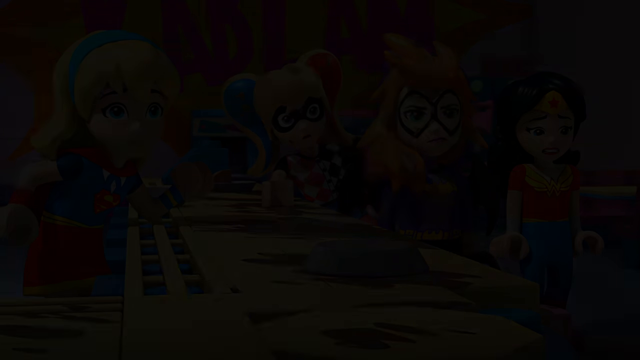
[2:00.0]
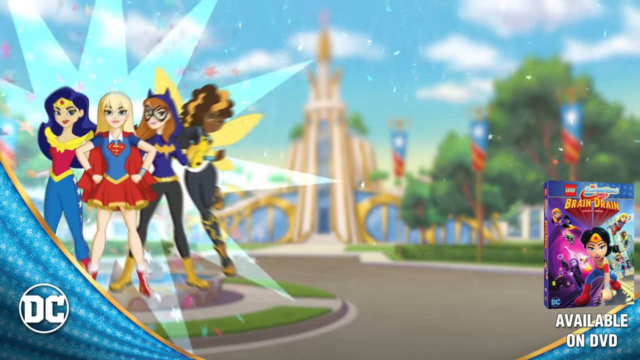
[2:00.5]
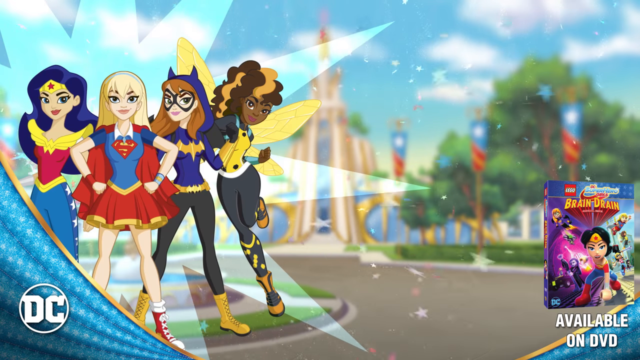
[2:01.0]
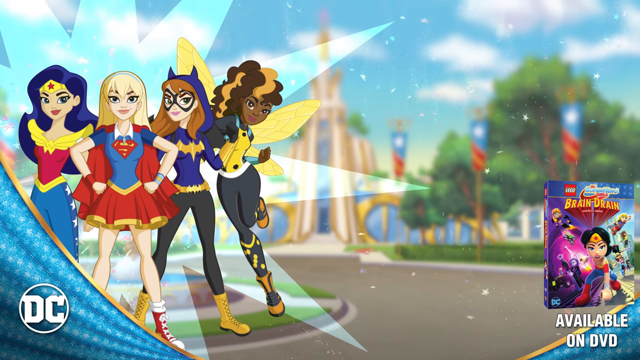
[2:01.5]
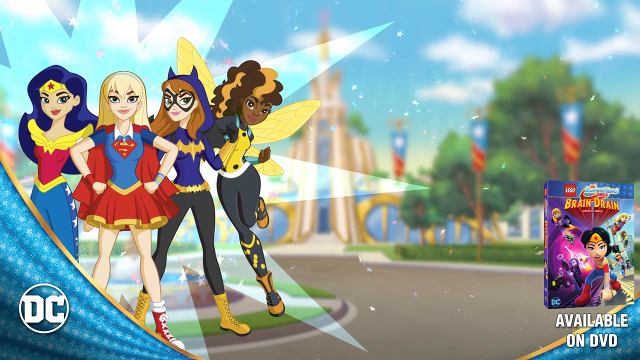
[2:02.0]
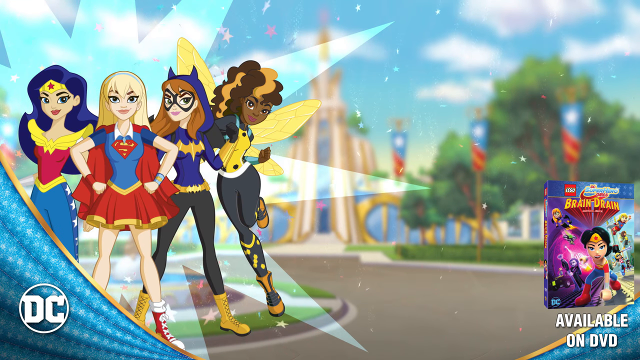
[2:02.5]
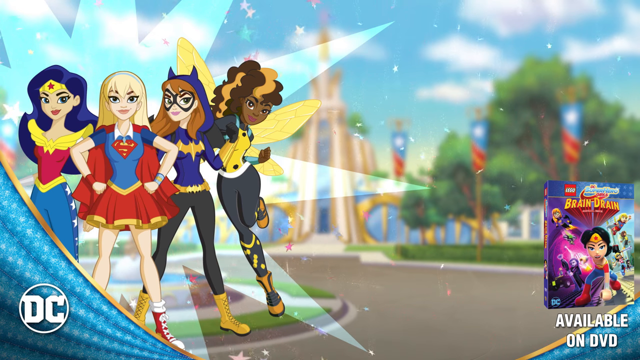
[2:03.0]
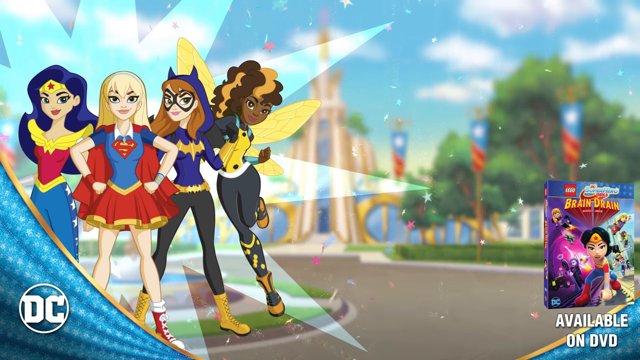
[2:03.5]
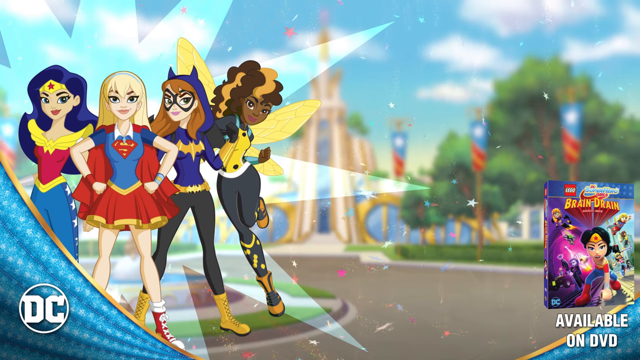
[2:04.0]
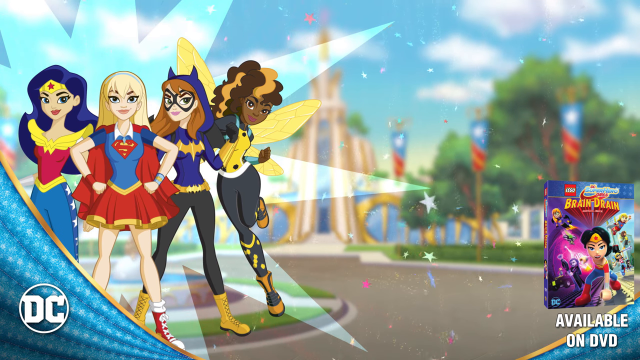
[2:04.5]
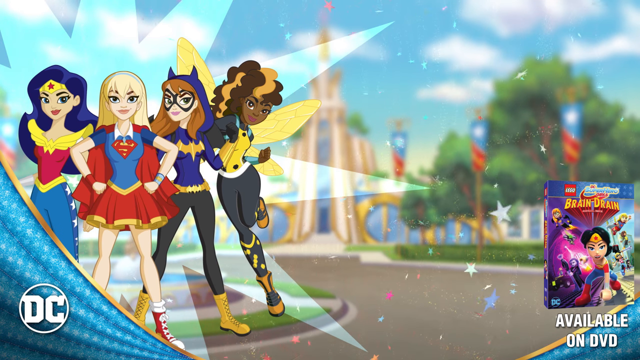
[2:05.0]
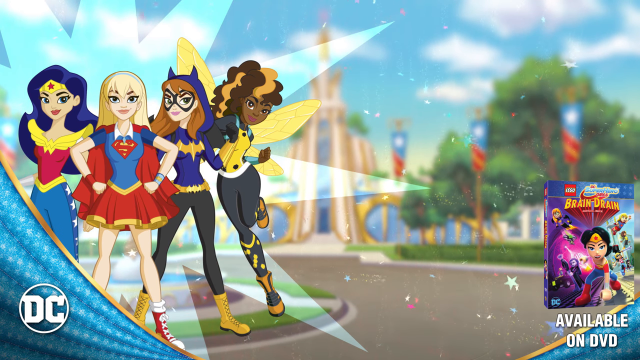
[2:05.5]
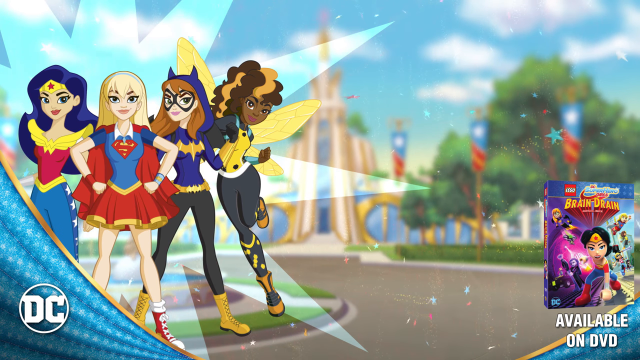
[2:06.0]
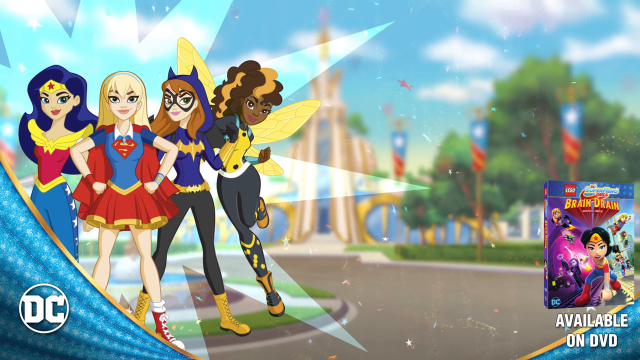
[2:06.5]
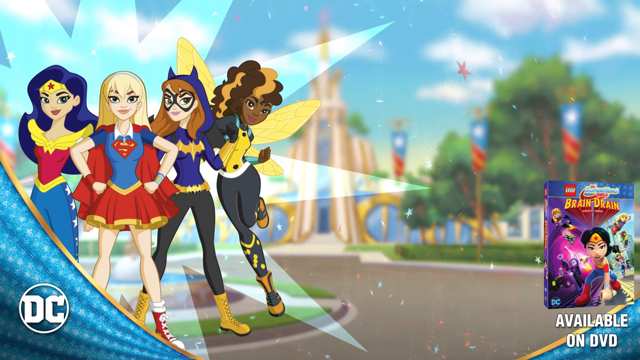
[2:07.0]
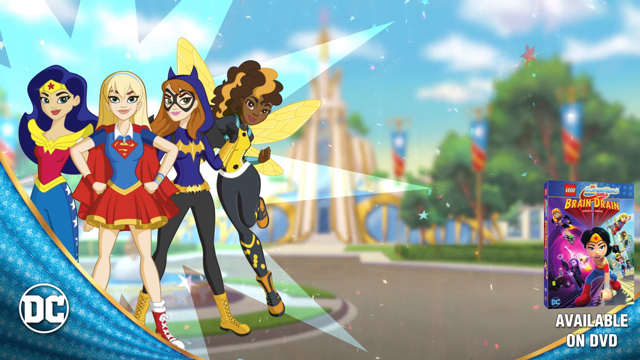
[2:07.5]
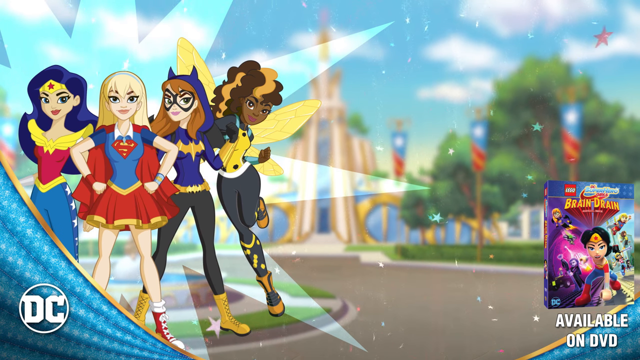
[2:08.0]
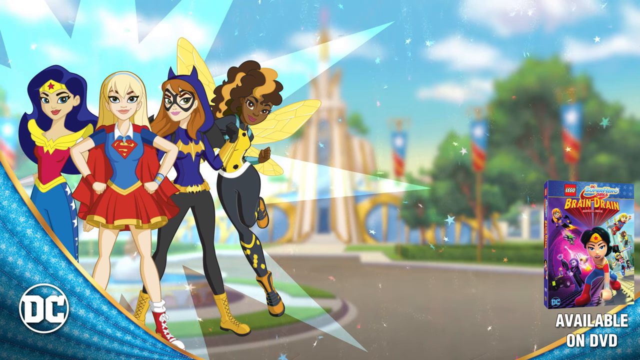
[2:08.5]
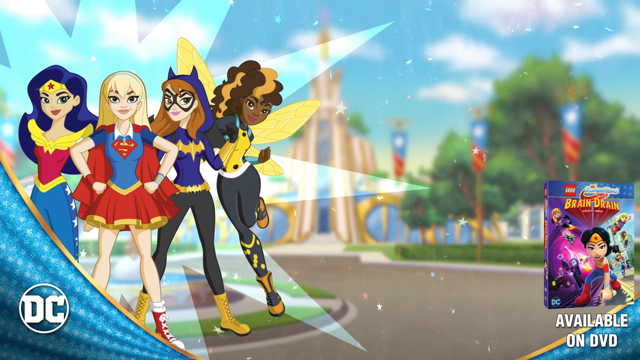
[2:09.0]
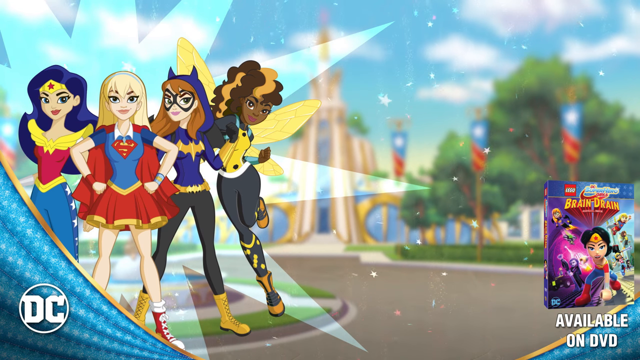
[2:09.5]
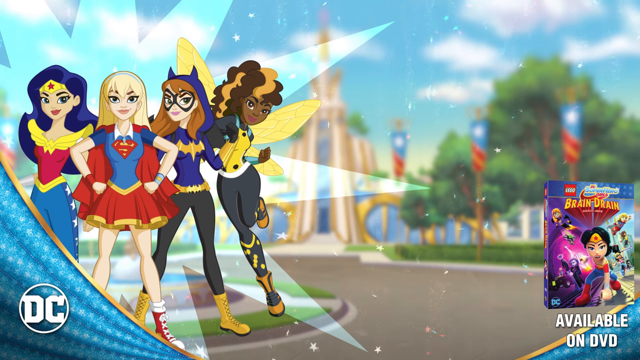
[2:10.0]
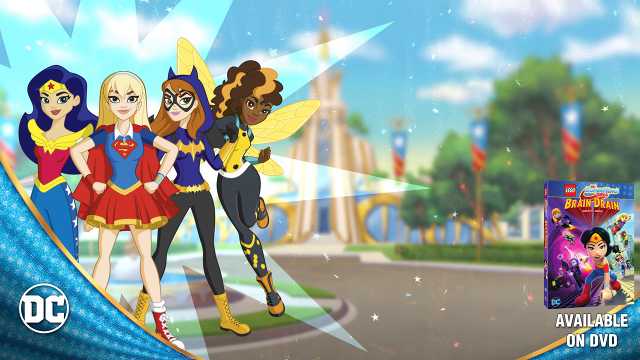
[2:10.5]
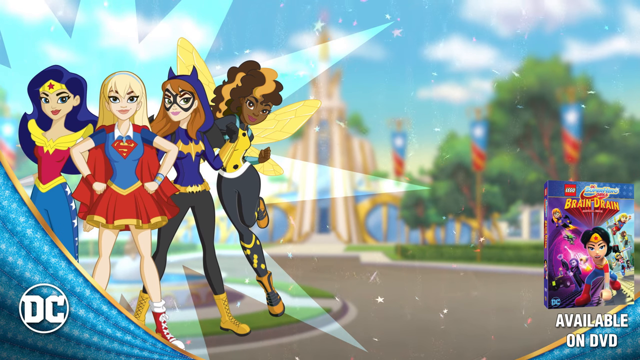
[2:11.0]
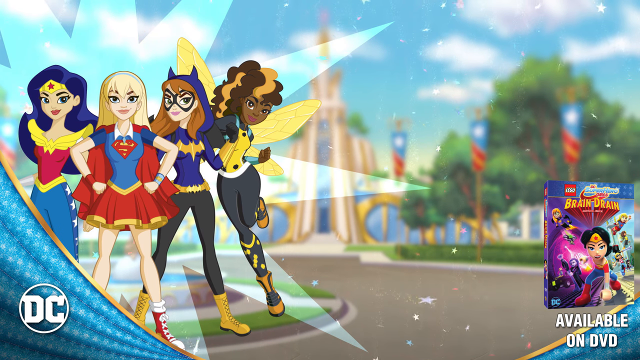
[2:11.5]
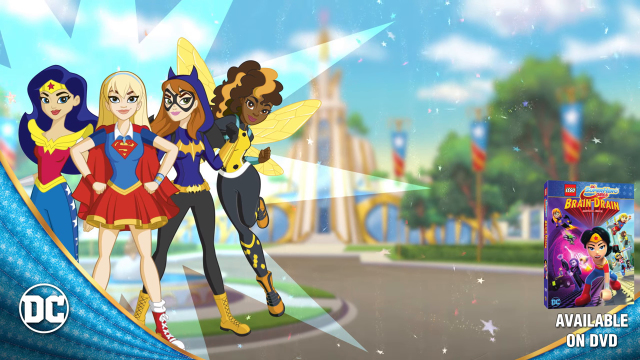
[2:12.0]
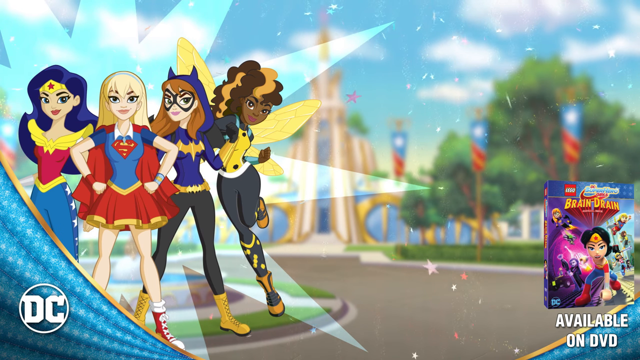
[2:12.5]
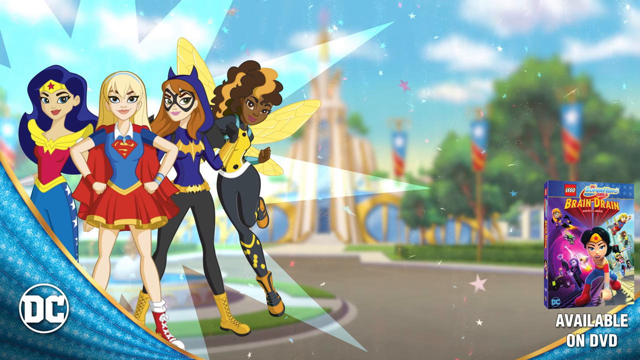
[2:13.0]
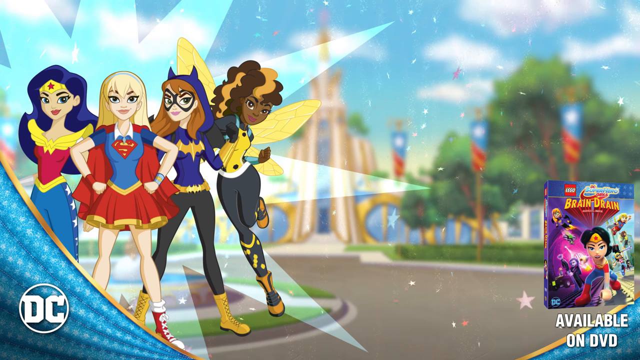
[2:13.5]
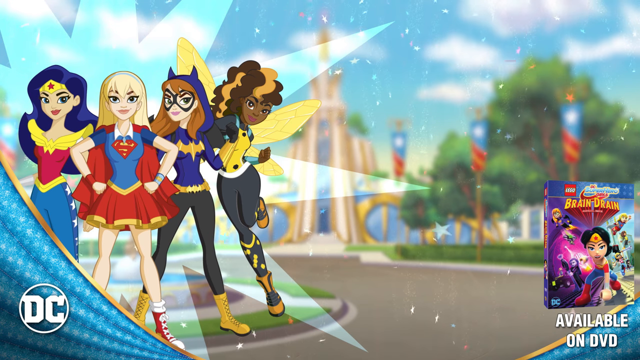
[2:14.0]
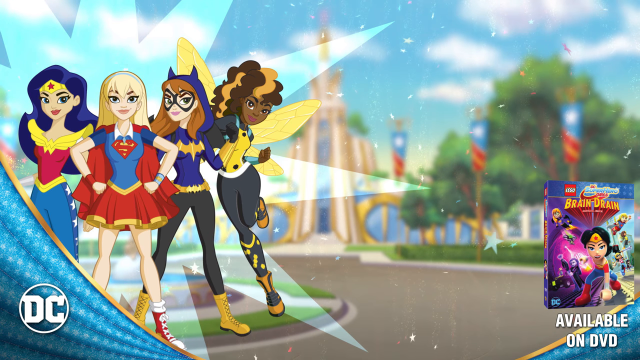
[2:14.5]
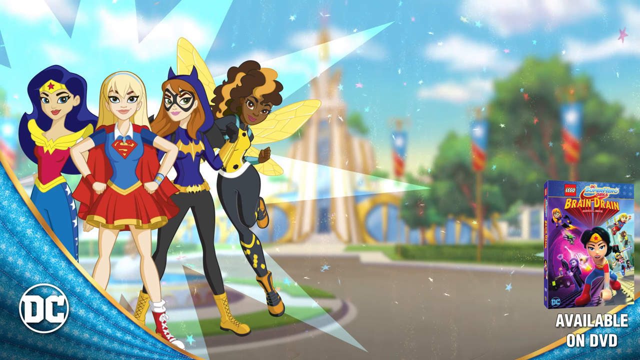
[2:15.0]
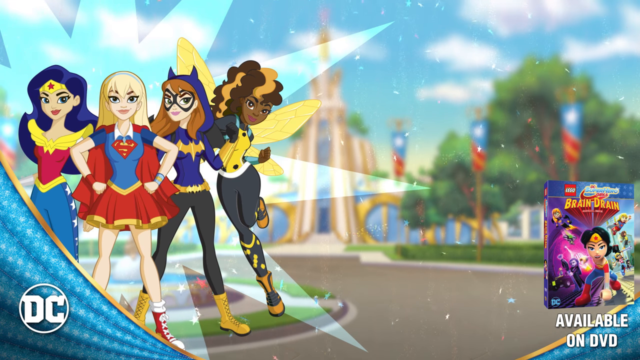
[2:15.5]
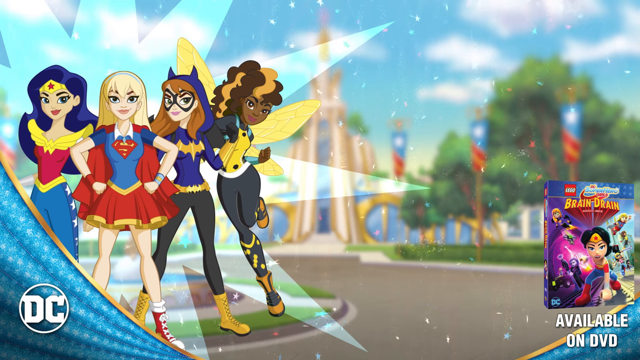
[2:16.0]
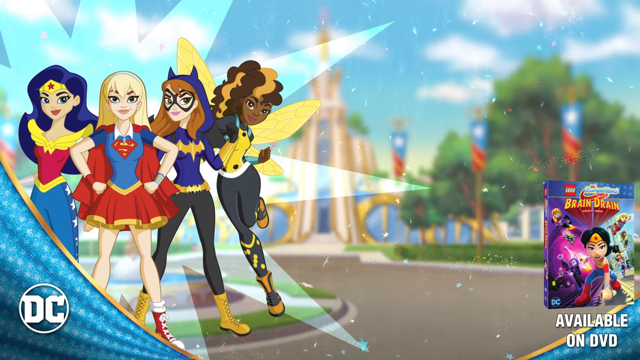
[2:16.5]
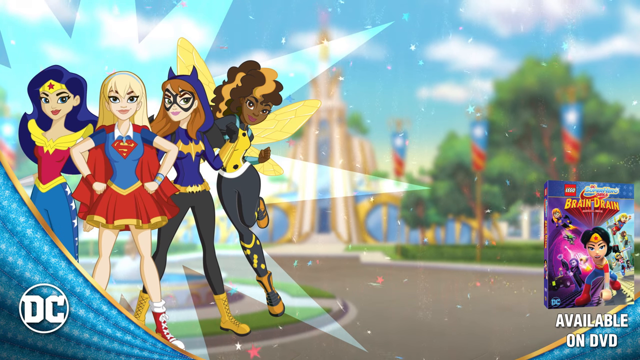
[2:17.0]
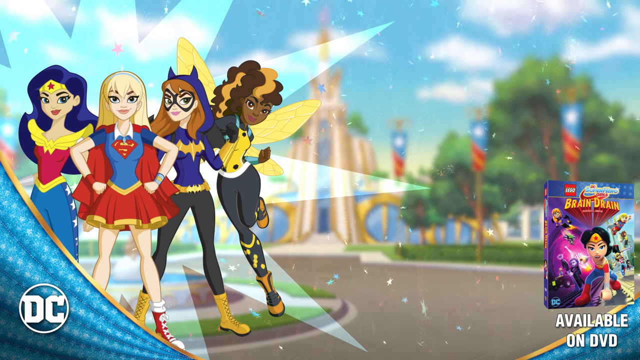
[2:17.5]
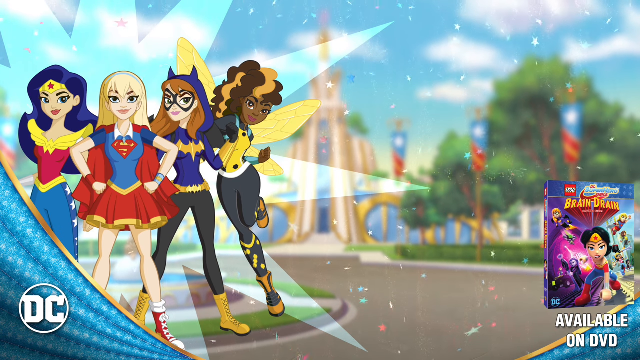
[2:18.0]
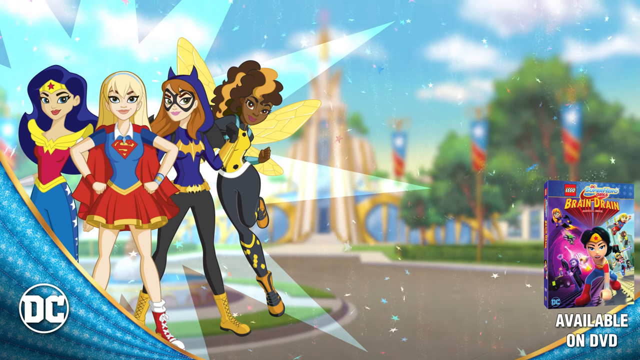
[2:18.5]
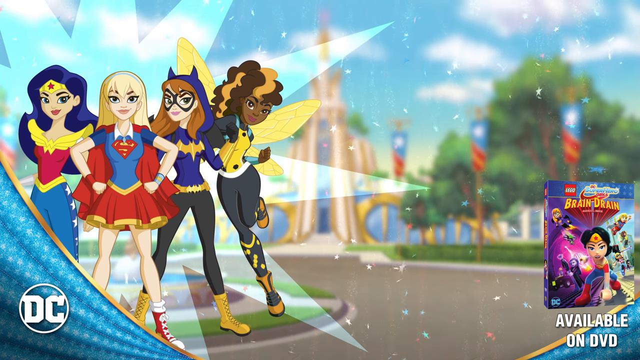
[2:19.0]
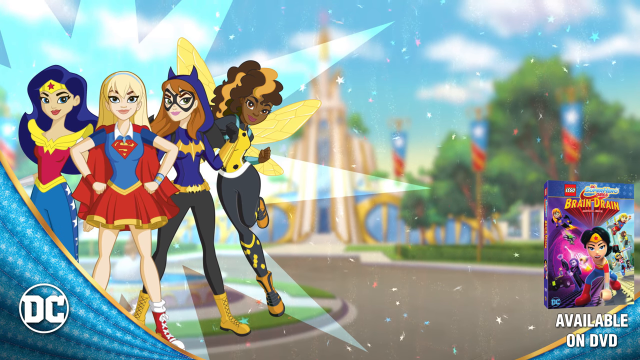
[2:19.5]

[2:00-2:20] A pop-up appears on the left side of the screen showing taller animated, non-Lego versions of the characters: Wonder Woman, Supergirl with her hands on her hips, Batgirl smirking, and an unidentified character who looks like she has fairy wings and has hair in two different shades of brown. In the lower left corner, "DC" appears in white with a white circle around it. On the right side, white text reads "Lego Brain Drain, available on DVD", and the DVD cover shows Wonder Woman as the main character, with other characters flying, apparently including Batgirl and Supergirl.